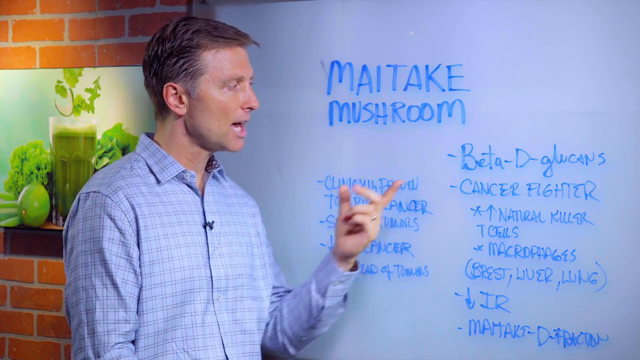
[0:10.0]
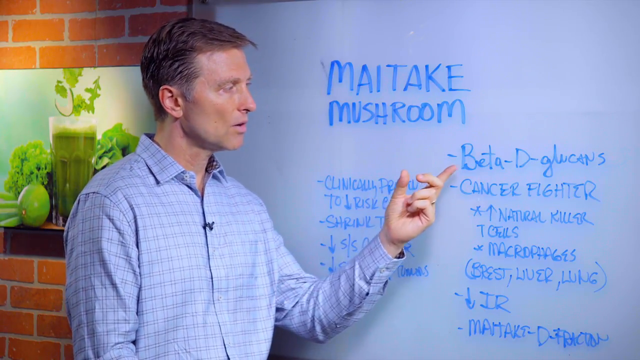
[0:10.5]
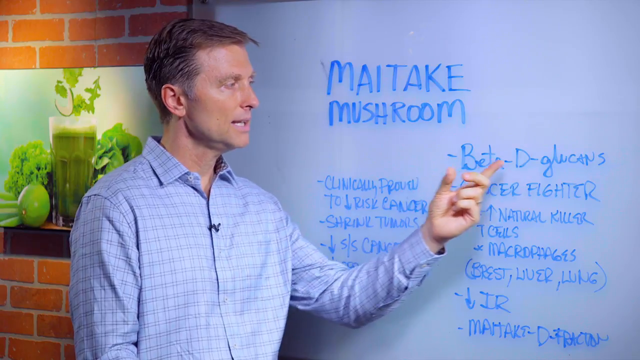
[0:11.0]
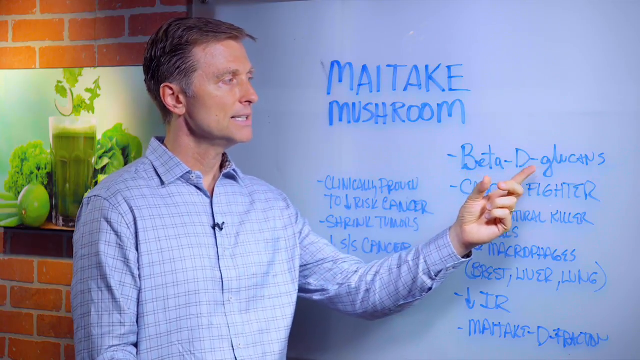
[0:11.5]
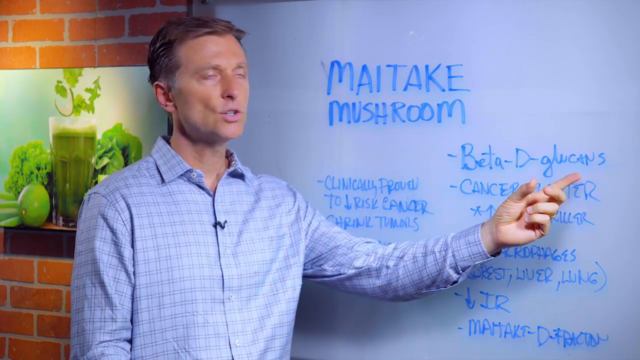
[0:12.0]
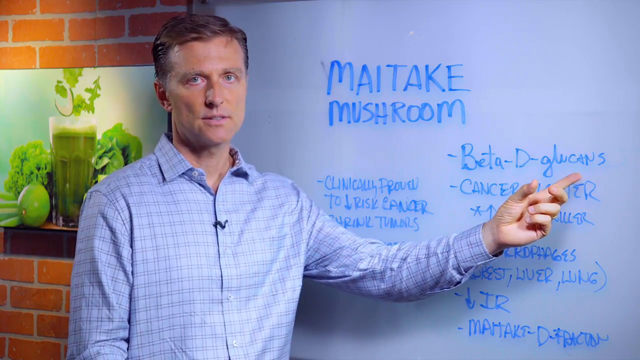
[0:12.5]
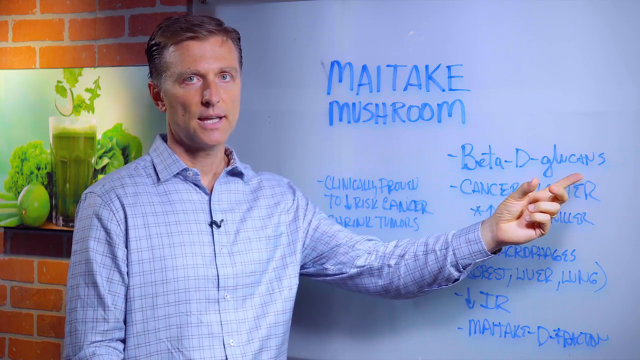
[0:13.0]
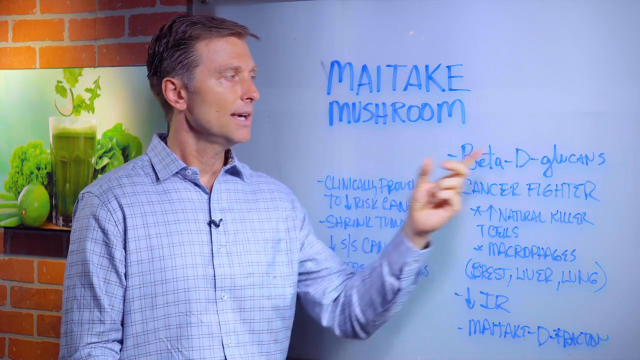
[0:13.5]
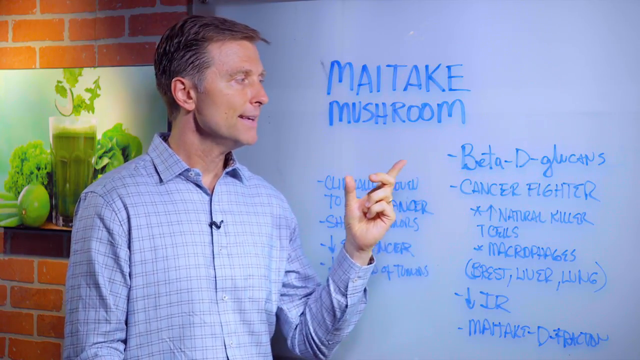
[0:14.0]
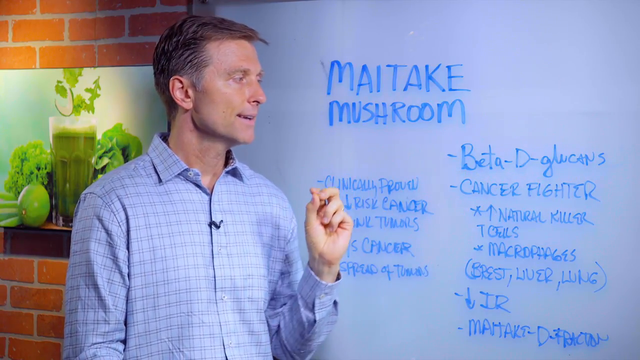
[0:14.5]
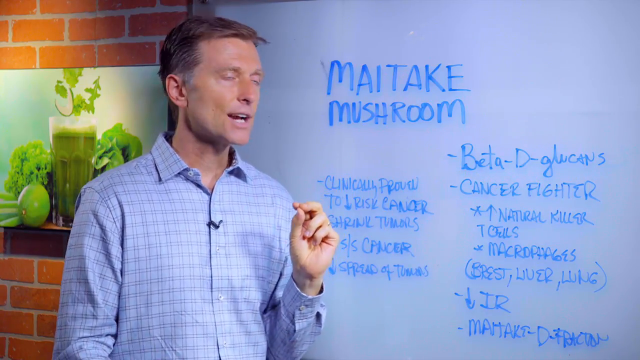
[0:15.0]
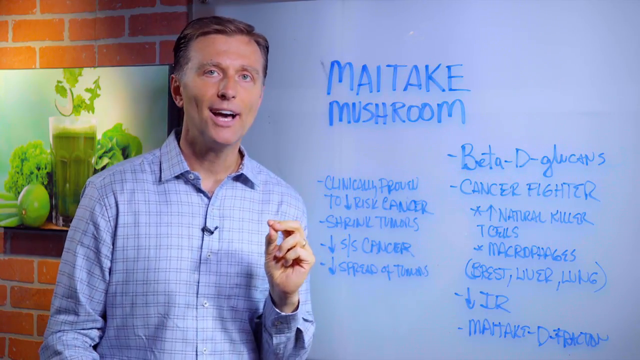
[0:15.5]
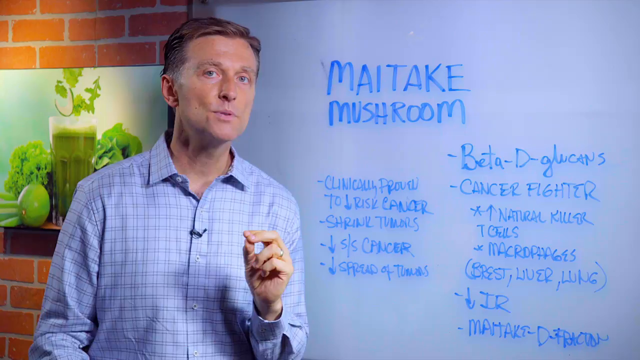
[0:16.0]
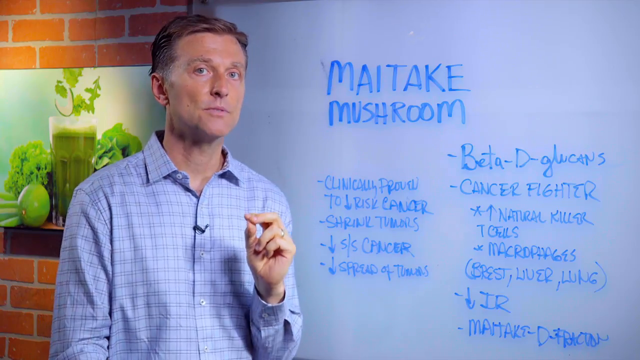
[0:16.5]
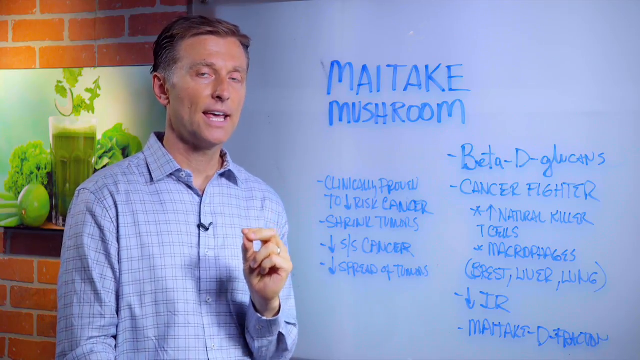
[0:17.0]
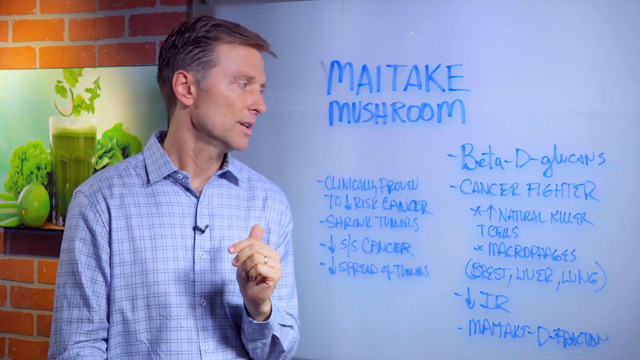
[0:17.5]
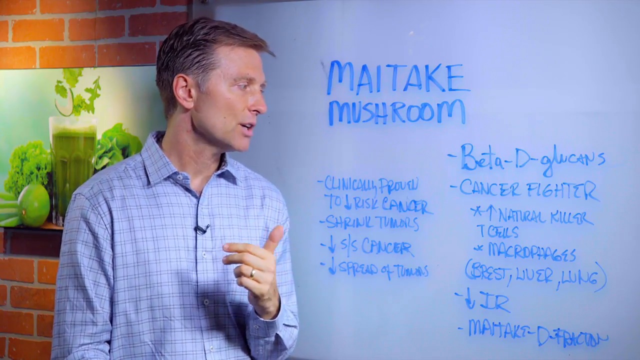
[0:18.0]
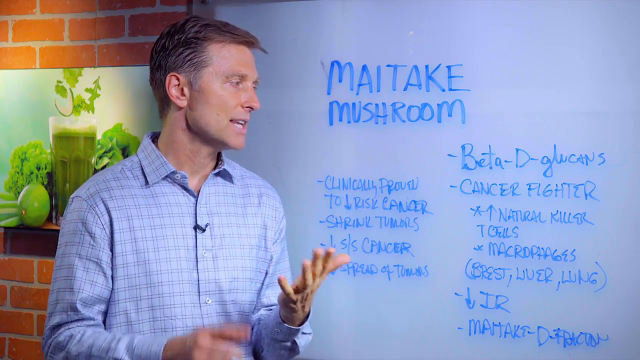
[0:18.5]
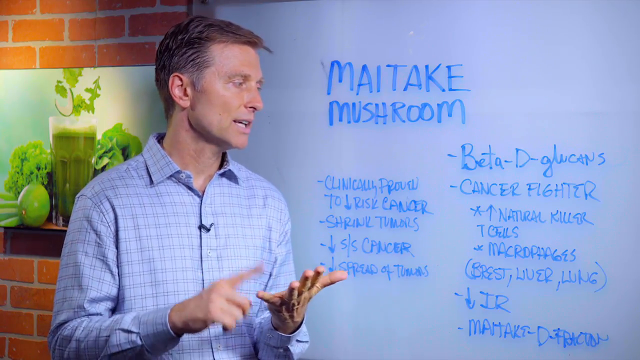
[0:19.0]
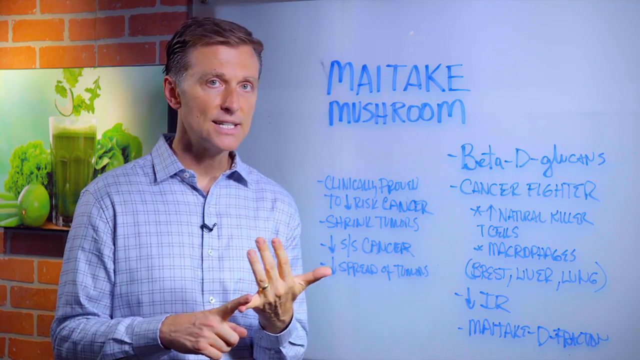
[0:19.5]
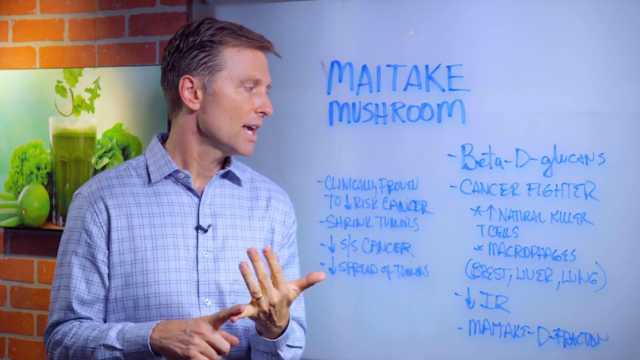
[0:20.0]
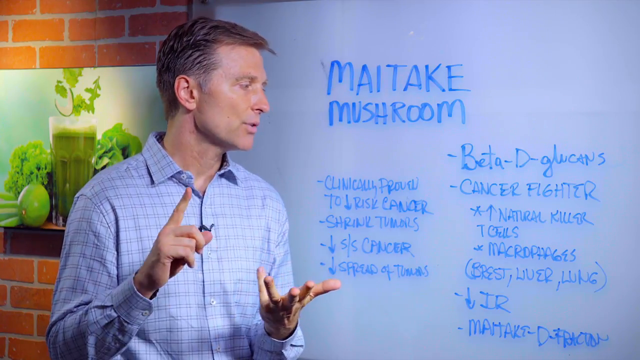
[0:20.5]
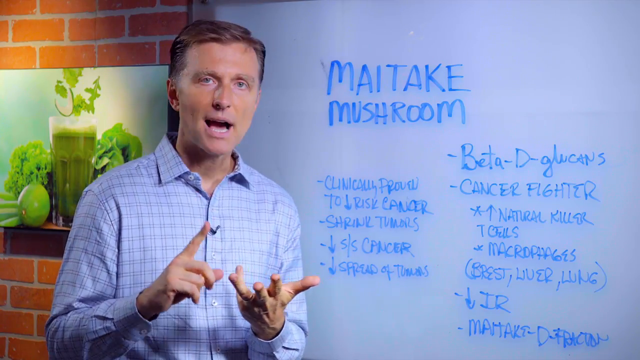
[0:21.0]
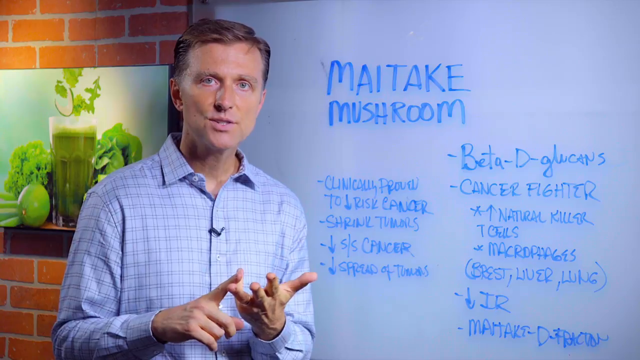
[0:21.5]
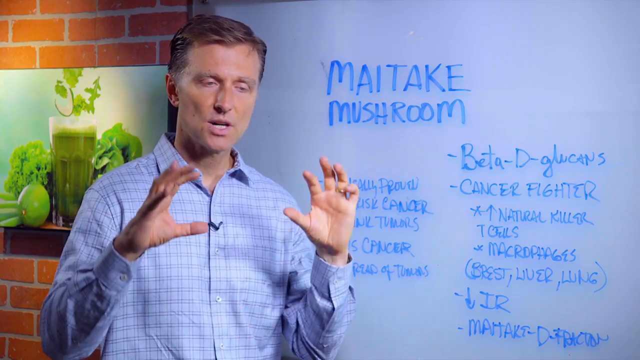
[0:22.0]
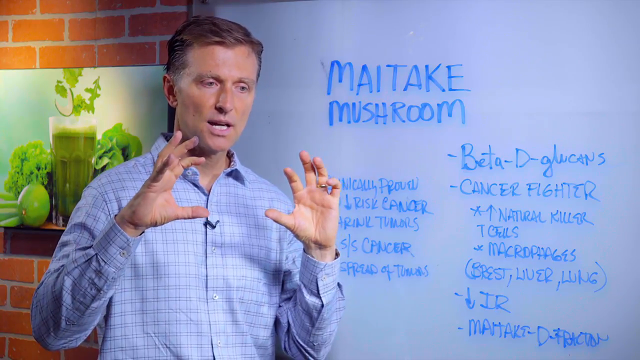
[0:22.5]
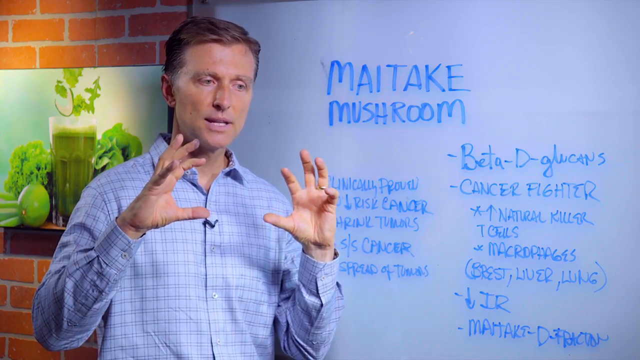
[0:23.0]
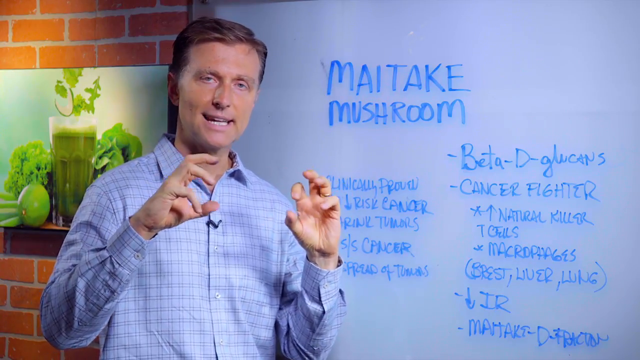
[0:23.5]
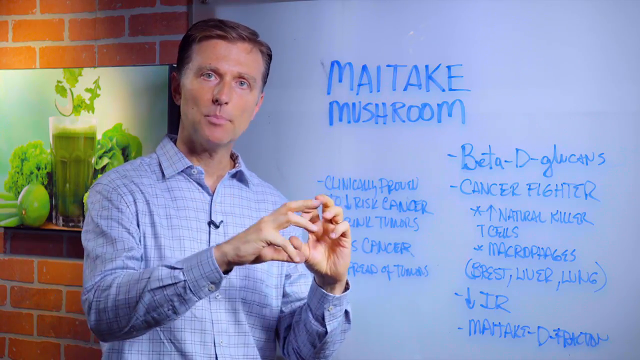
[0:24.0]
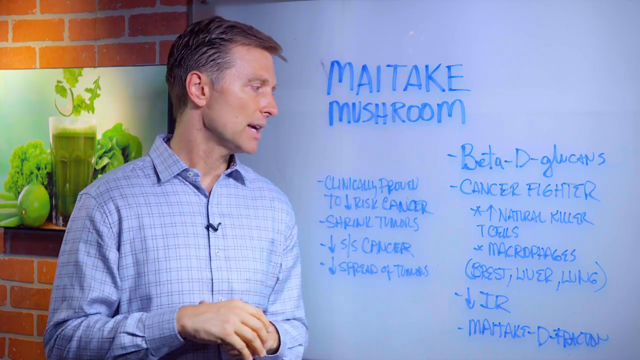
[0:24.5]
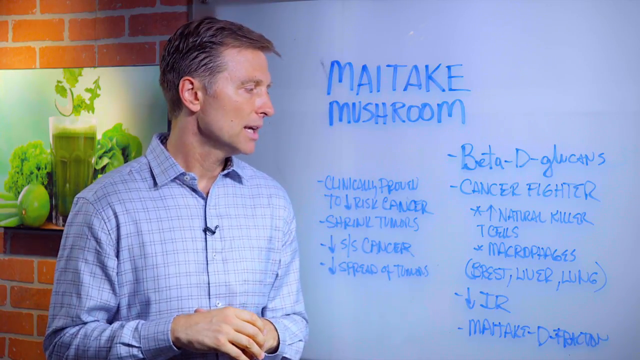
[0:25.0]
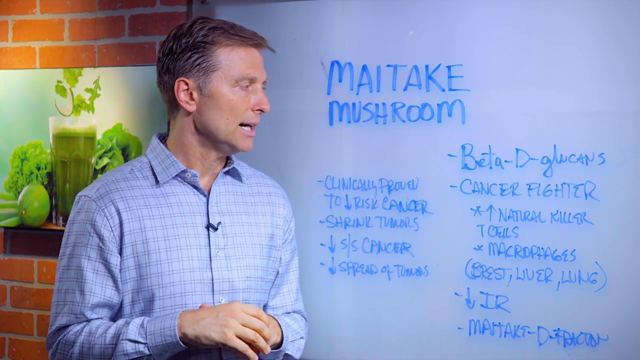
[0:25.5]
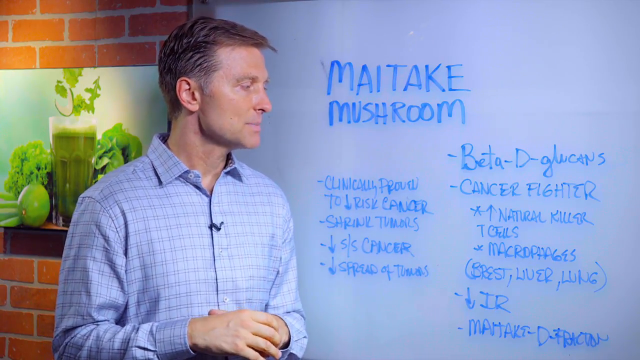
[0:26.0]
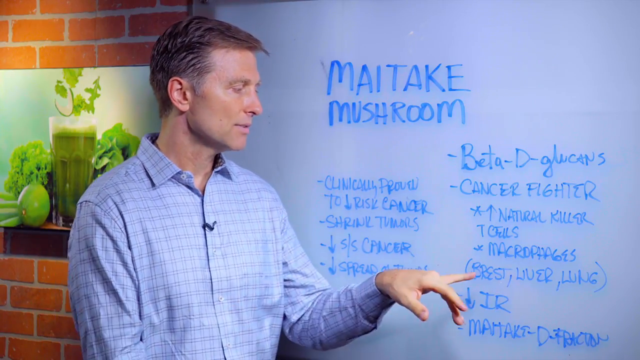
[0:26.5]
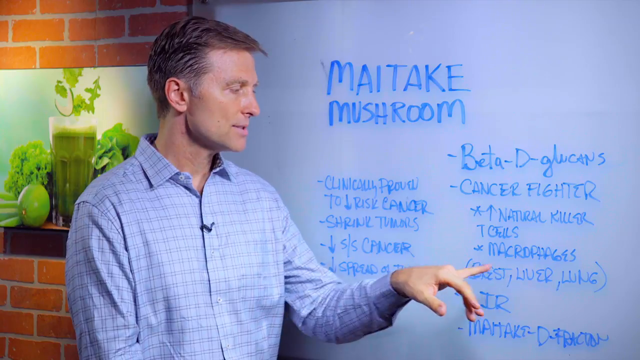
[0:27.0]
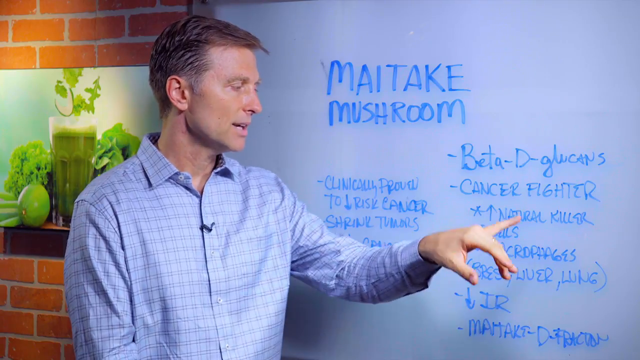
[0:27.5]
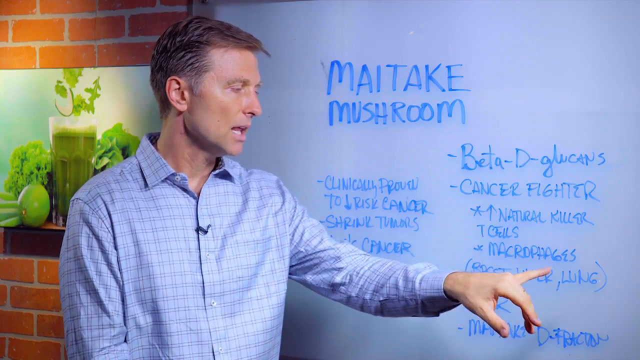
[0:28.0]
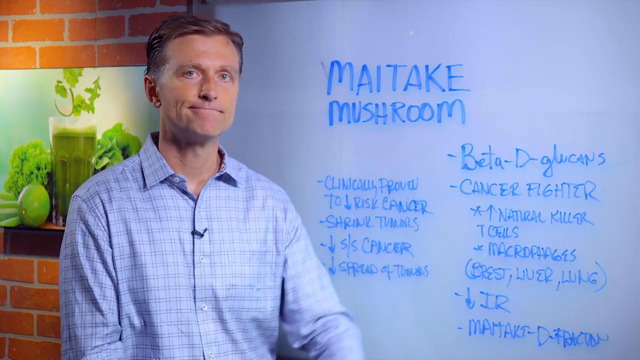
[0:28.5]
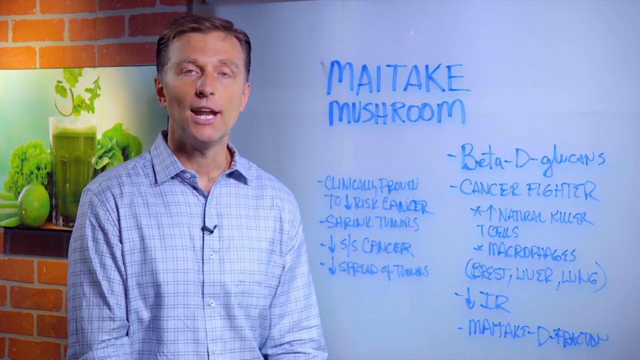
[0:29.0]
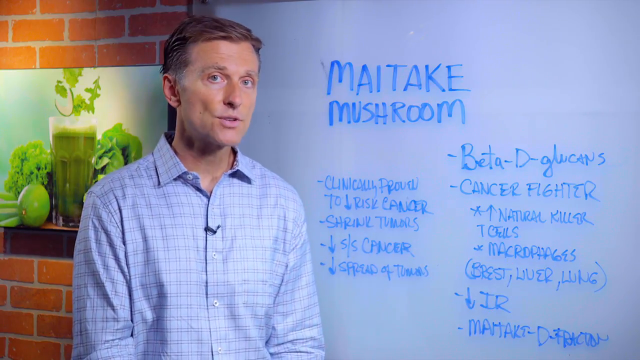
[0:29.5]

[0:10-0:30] The man keeps talking, going through the ingredients and benefits on the board, which looks like some type of mushroom recipe. He points at a benefit or ingredient starting with "beta" at the top of the right column of writing in blue sharpie, then pulls his hand back toward himself with his index and middle fingers pressed against his thumb. Still talking, he points at the whiteboard again. He holds his left palm outward with the fingers spread and places his right pinky on his left pinky, then makes more hand motions as he continues to talk. Finally he points at the right-hand column of writing.